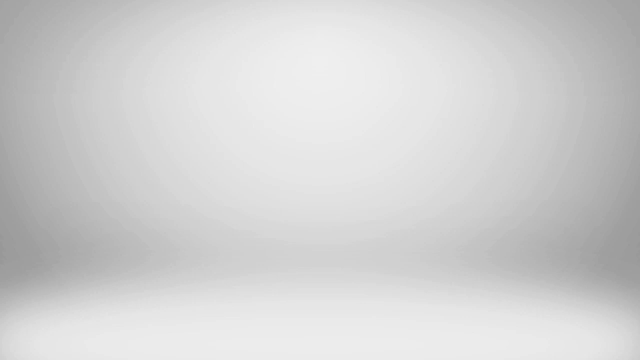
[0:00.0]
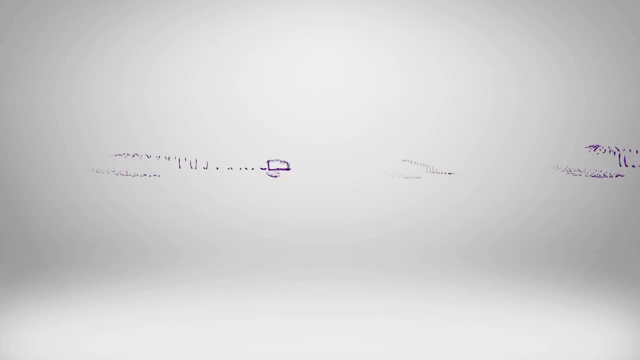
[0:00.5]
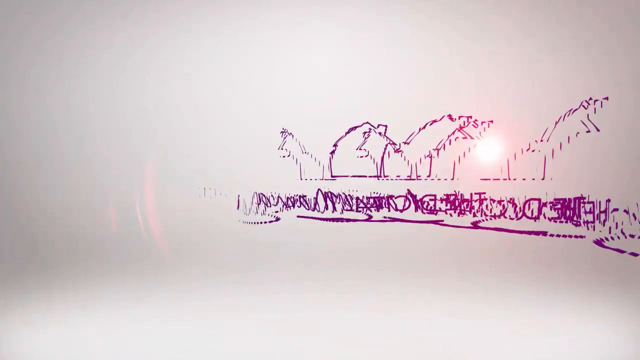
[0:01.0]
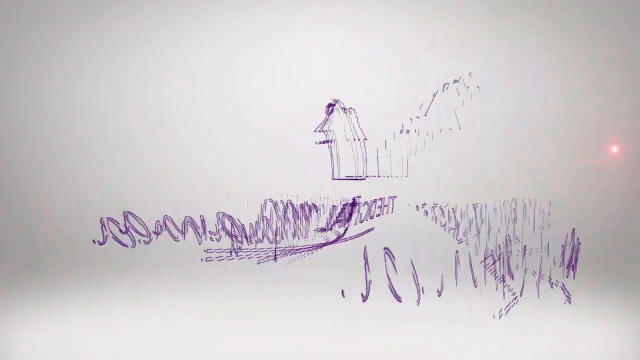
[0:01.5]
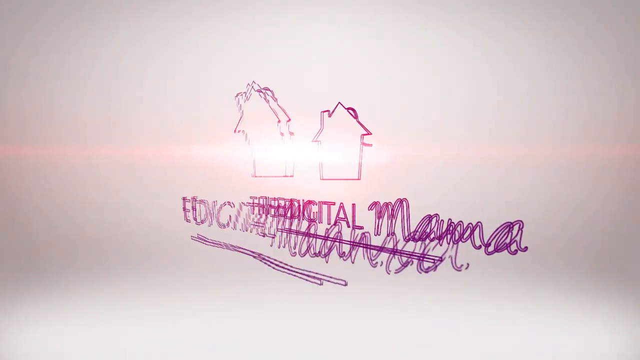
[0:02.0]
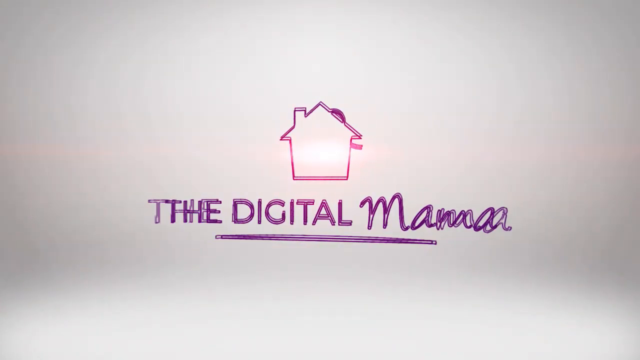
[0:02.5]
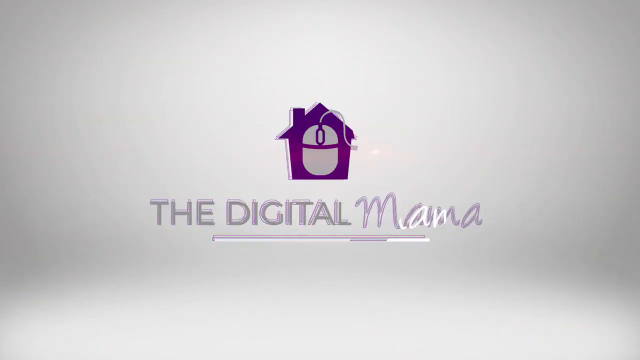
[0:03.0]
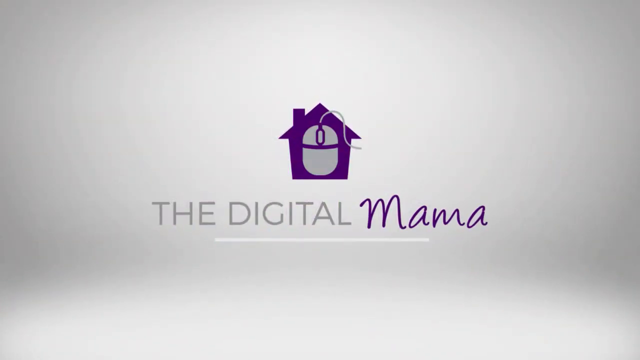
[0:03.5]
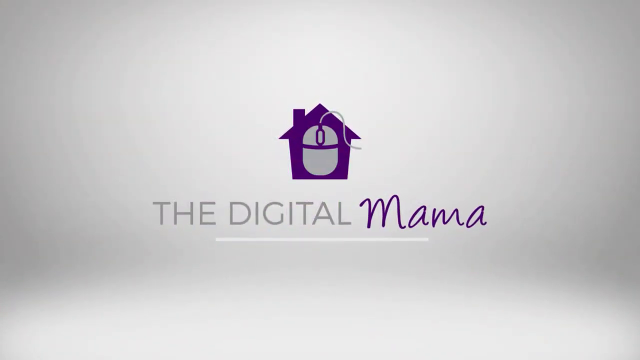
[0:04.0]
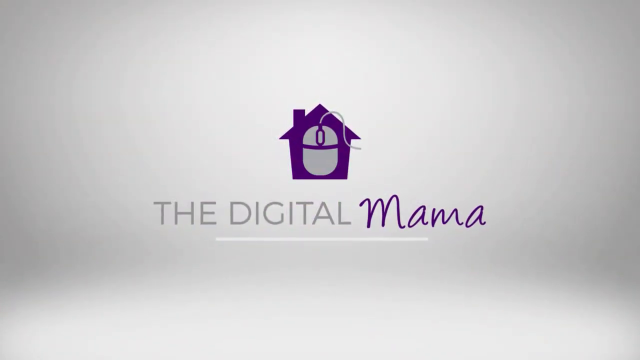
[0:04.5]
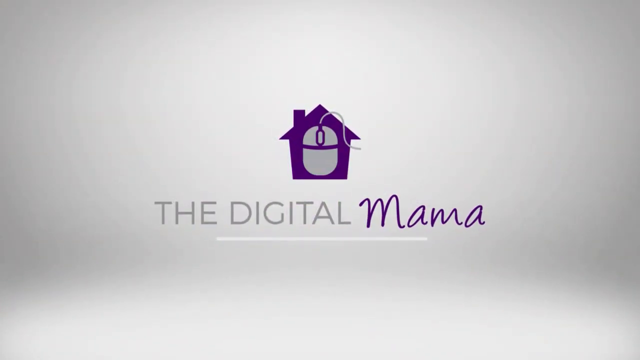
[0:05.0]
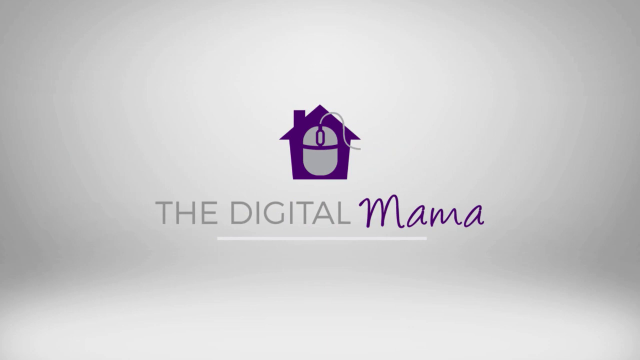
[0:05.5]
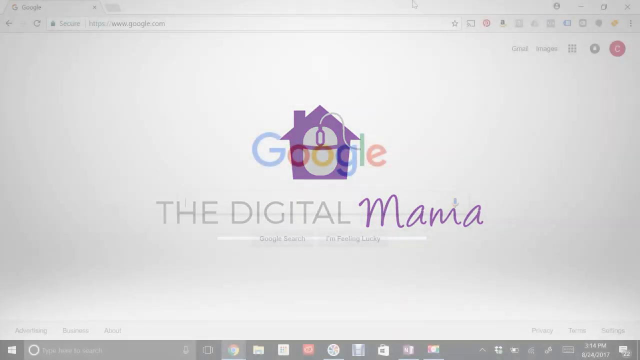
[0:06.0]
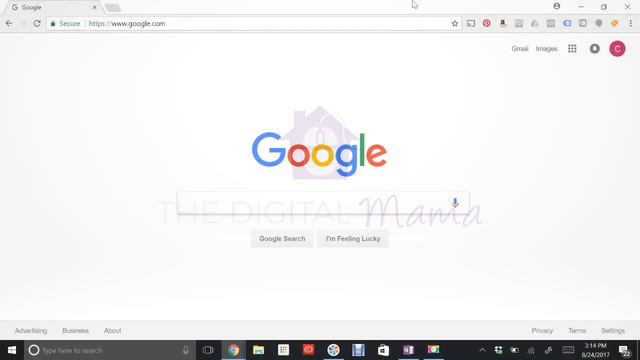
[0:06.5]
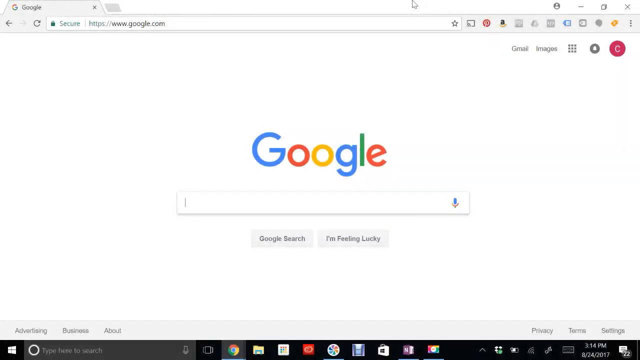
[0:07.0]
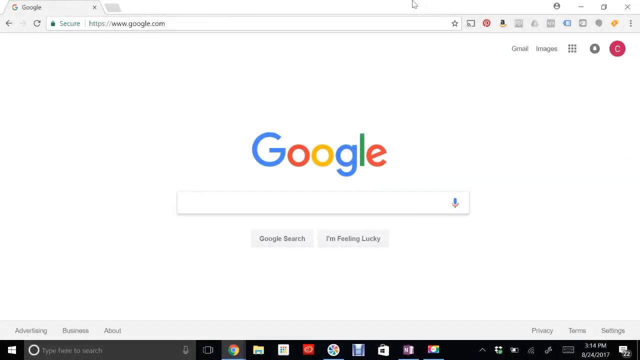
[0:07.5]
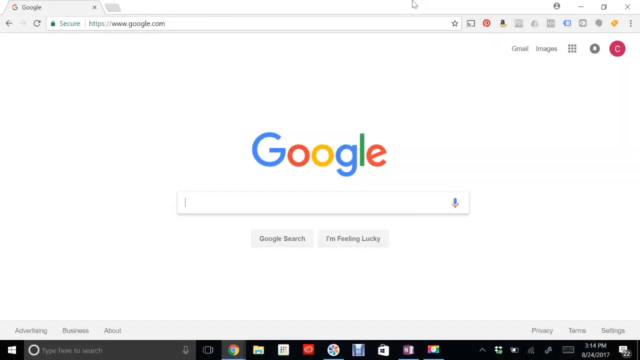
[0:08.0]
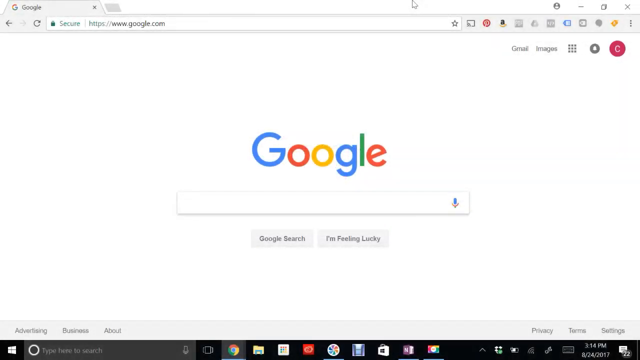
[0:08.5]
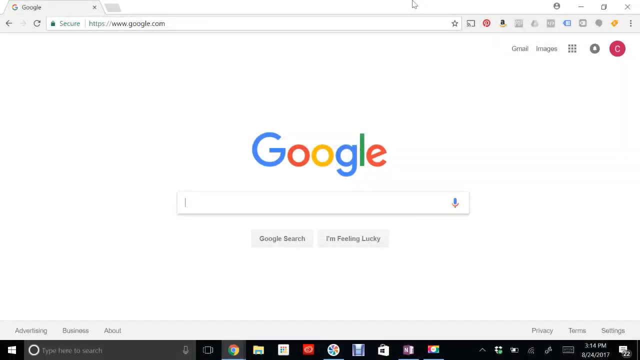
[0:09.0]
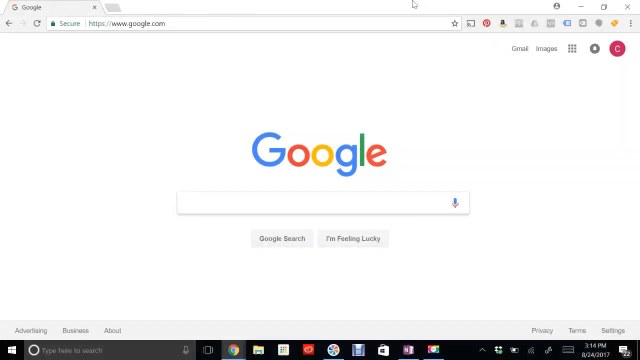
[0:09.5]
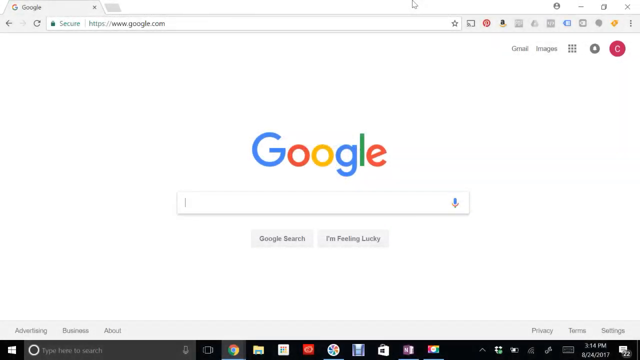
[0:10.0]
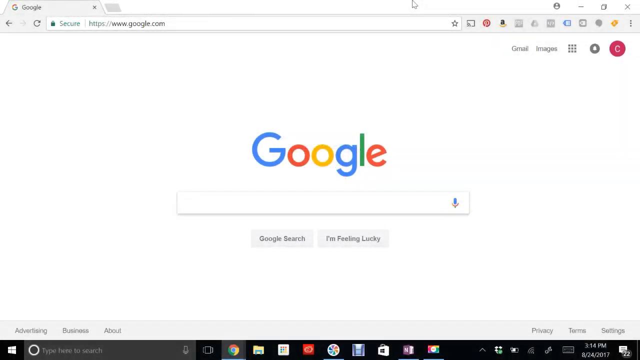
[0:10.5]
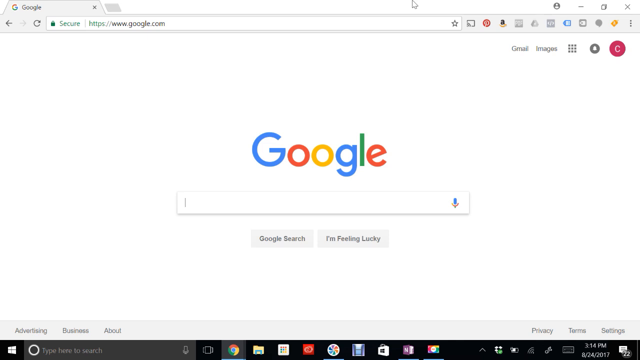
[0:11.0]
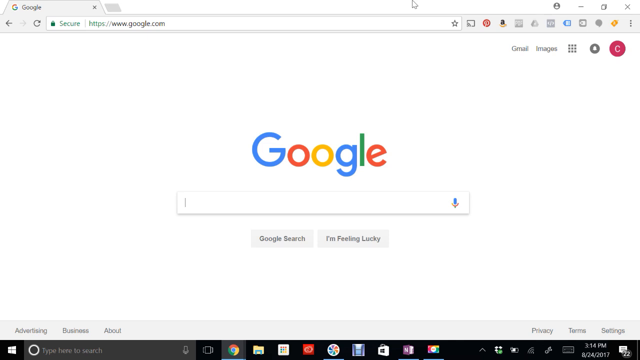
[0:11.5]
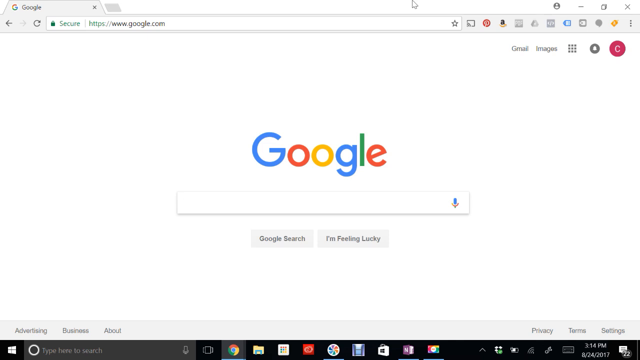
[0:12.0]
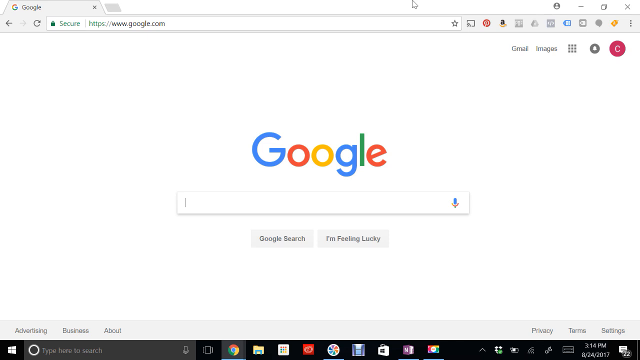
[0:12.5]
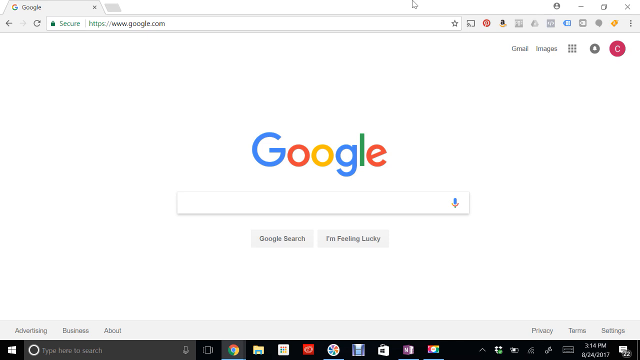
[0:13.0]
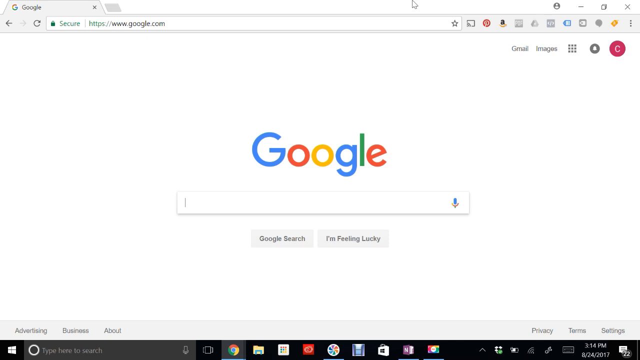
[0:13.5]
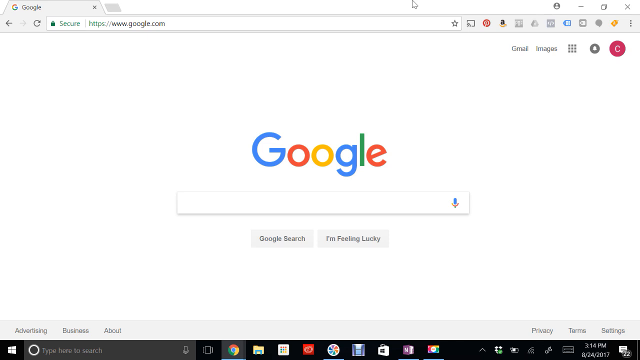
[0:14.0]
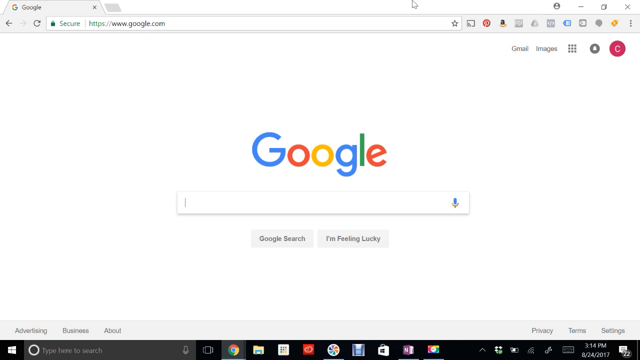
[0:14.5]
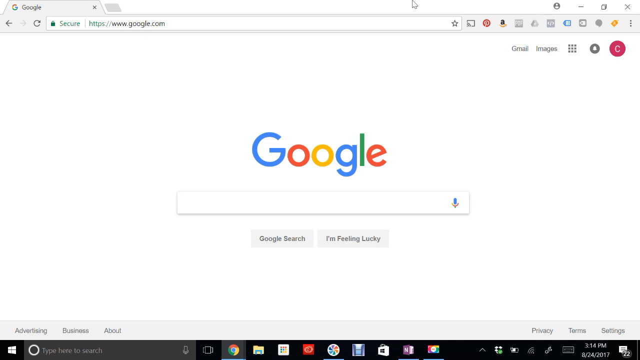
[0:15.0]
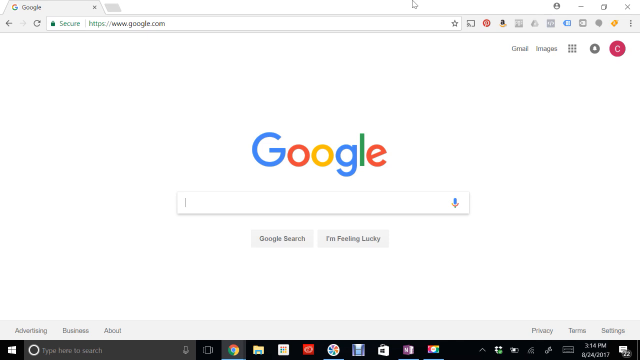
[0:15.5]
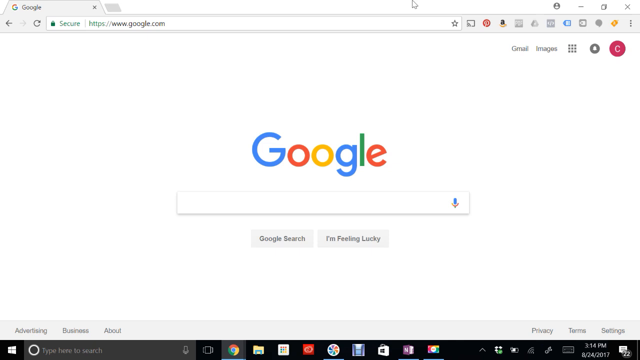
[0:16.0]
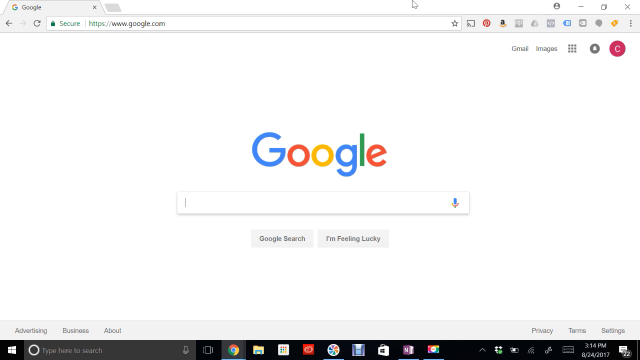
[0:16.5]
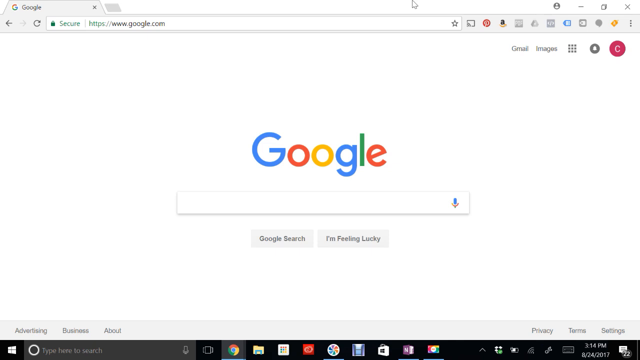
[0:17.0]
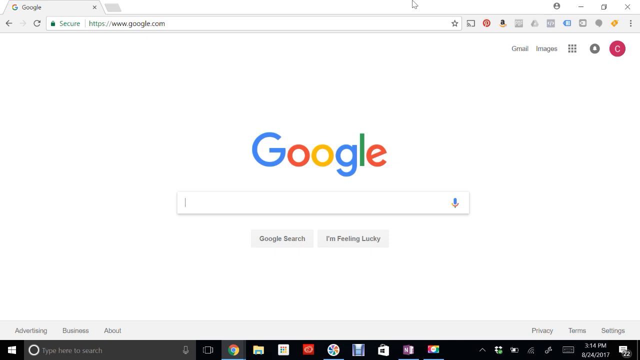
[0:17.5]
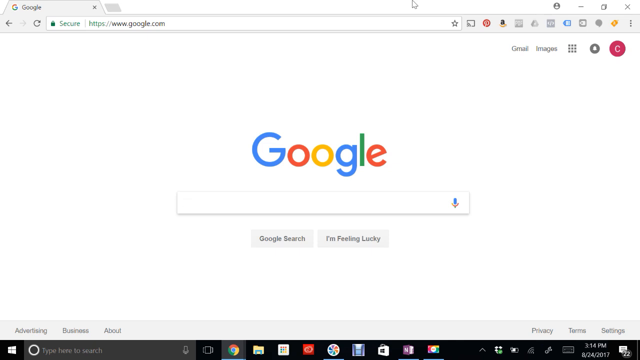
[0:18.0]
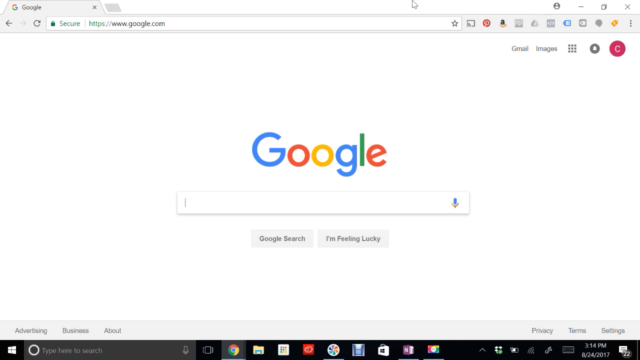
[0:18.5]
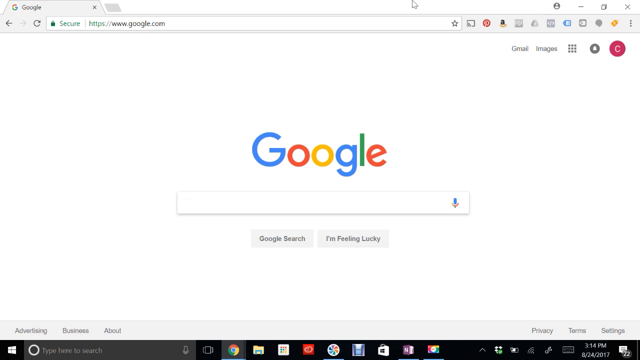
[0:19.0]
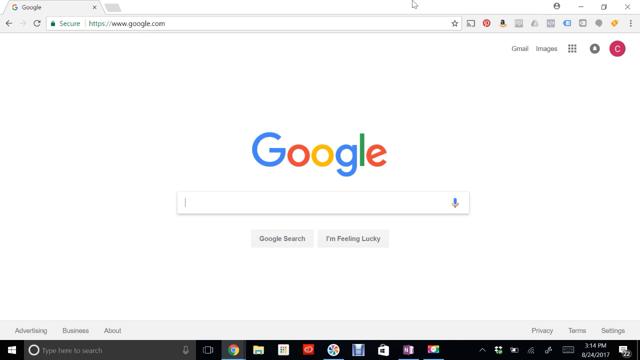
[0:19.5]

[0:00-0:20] The video opens with a professional-looking logo reading "the digital mama": the words "the digital" are in grey sans-serif capitals and "mama" is in a purple handwritten typeface, and the logo itself is a little purple house with a mouse in the middle of it. The text swirls onto a grey background and stays there for a bit, suggesting it is possibly a promotional video or an ident. The scene then changes to an almost static shot of a Google homepage, with just a cursor blinking in the search bar. The mouse moves around, and then the screen goes blank and grey.